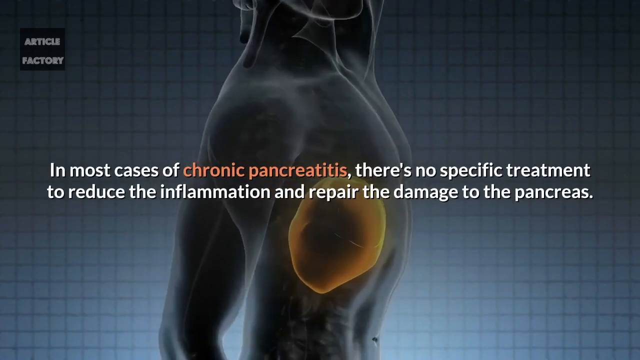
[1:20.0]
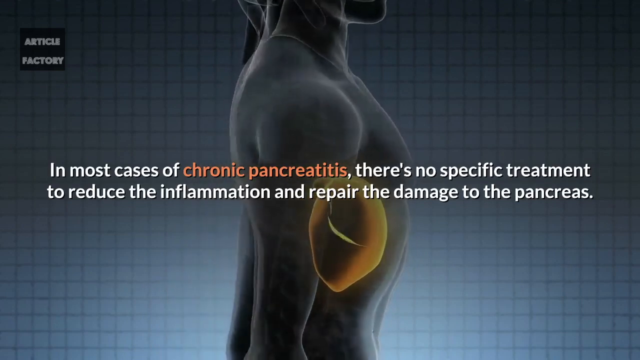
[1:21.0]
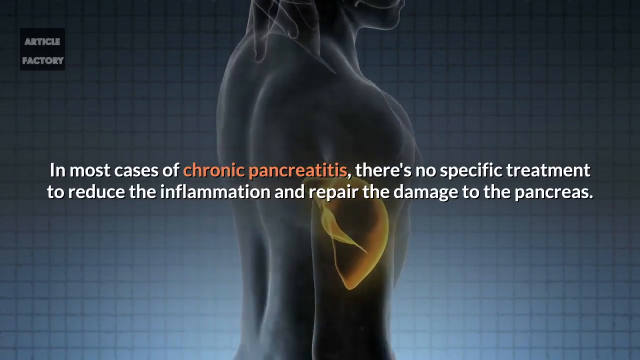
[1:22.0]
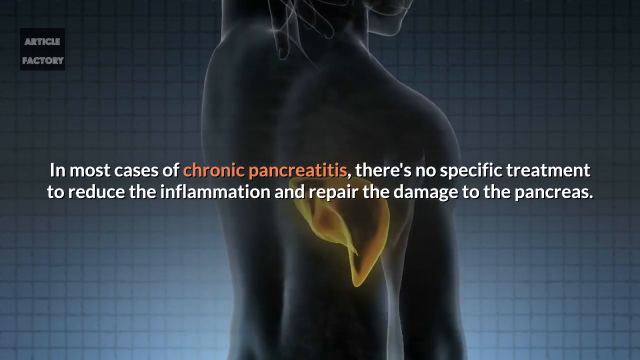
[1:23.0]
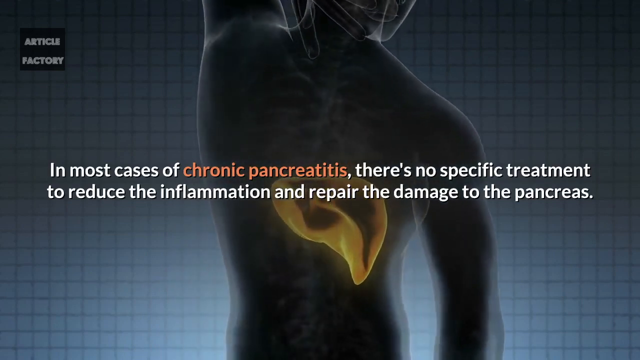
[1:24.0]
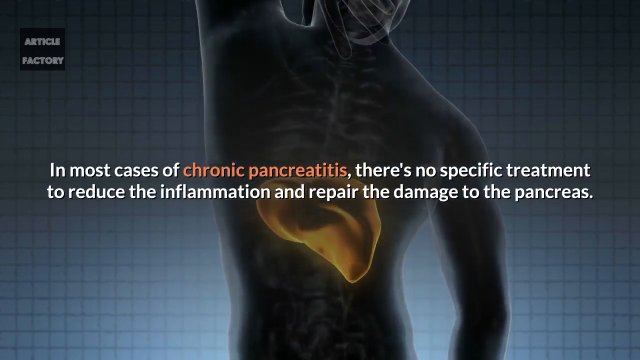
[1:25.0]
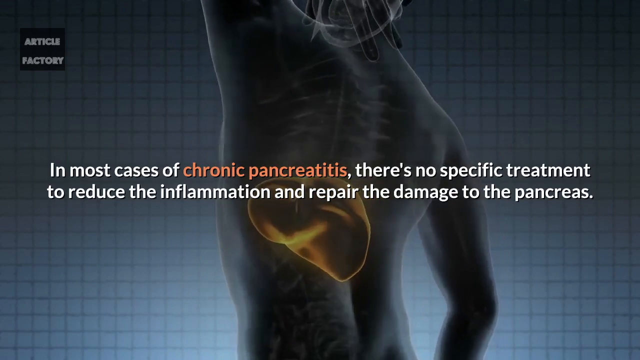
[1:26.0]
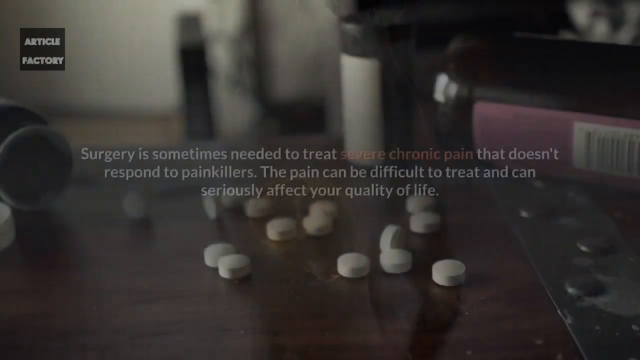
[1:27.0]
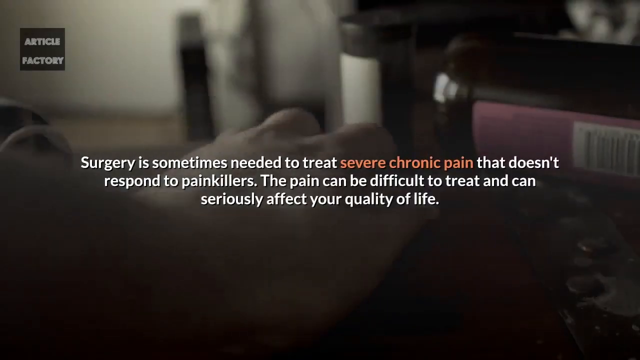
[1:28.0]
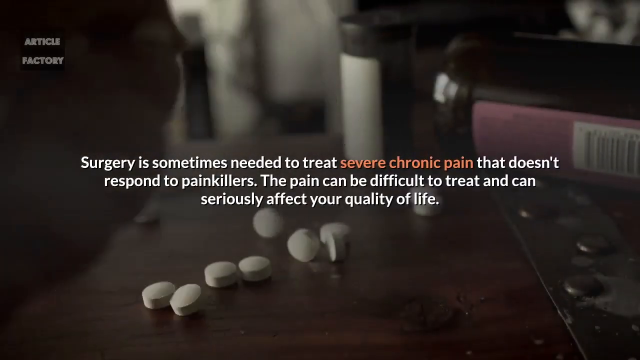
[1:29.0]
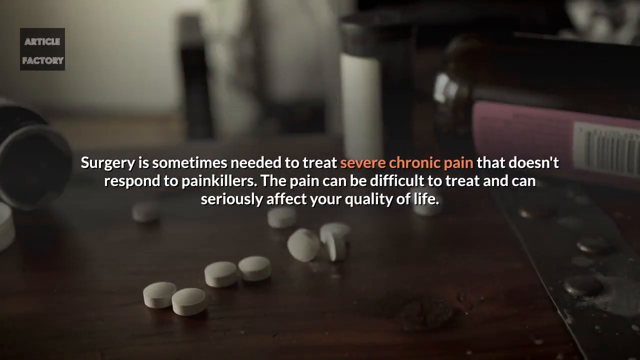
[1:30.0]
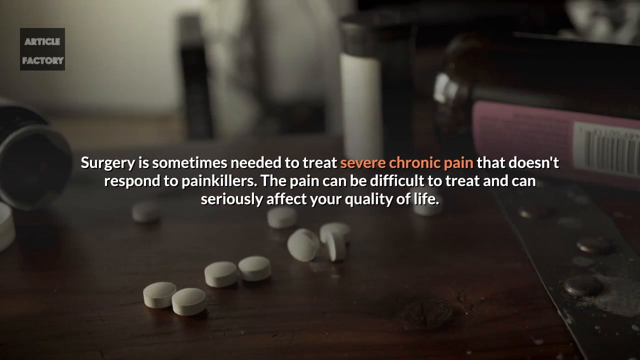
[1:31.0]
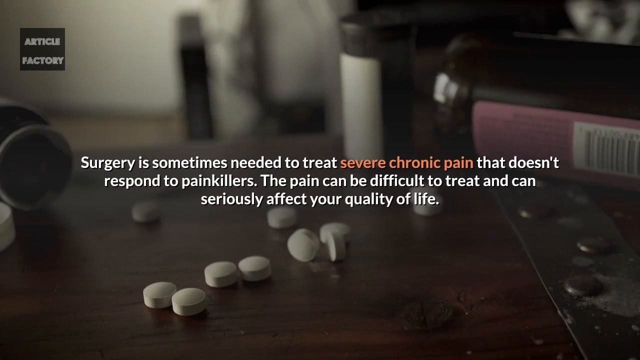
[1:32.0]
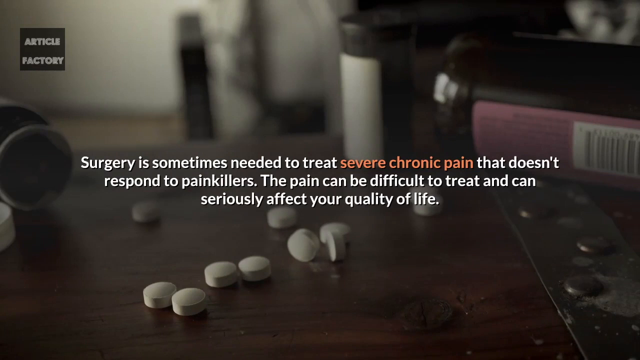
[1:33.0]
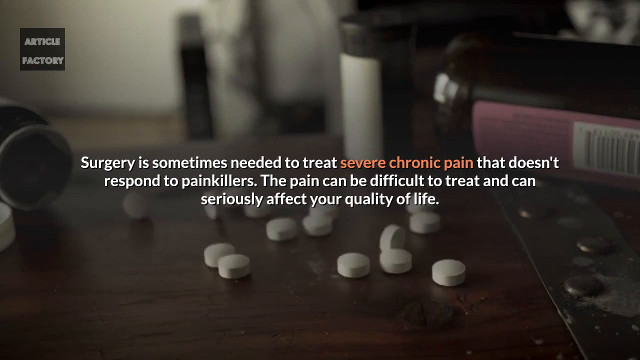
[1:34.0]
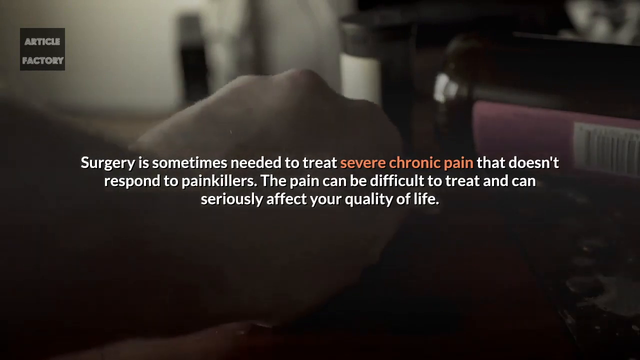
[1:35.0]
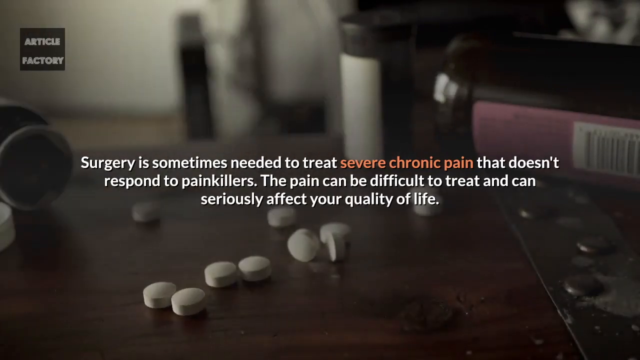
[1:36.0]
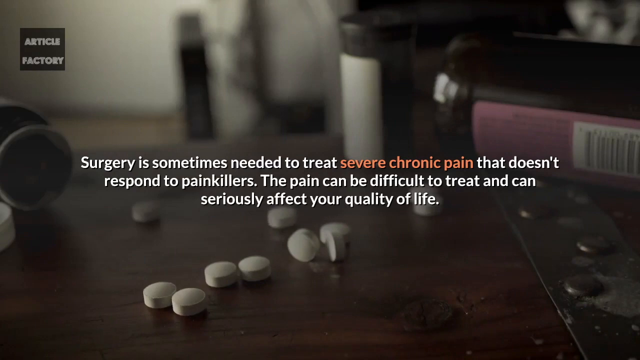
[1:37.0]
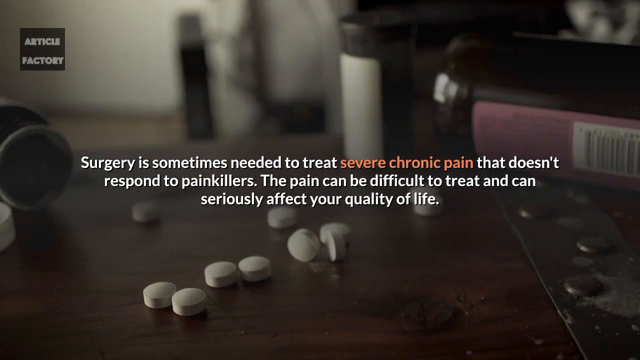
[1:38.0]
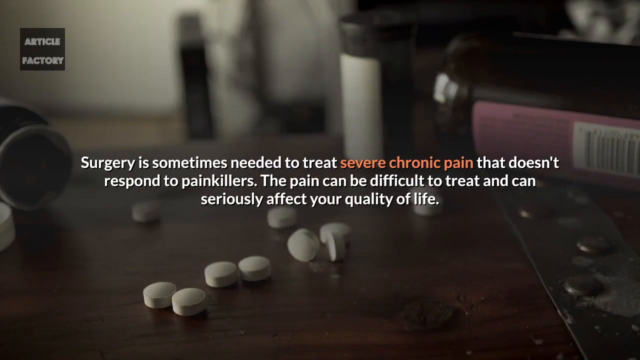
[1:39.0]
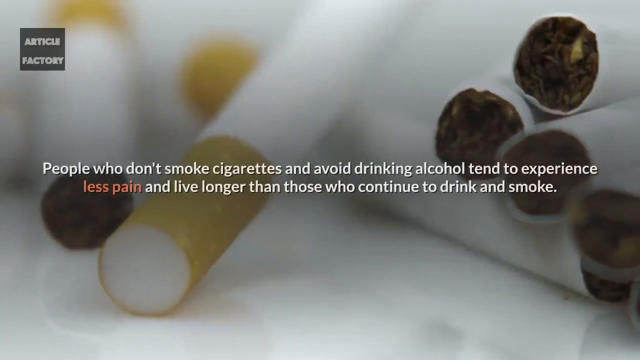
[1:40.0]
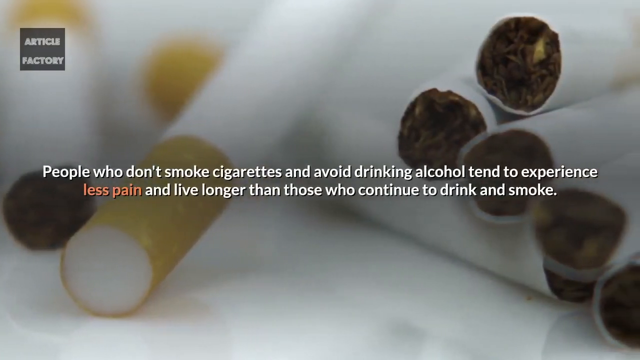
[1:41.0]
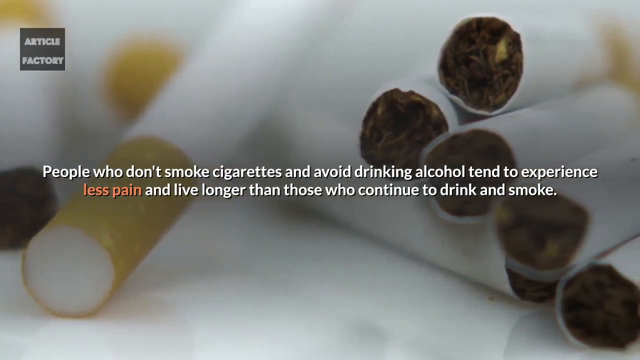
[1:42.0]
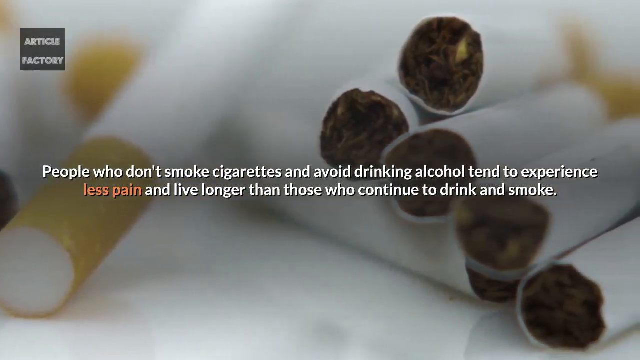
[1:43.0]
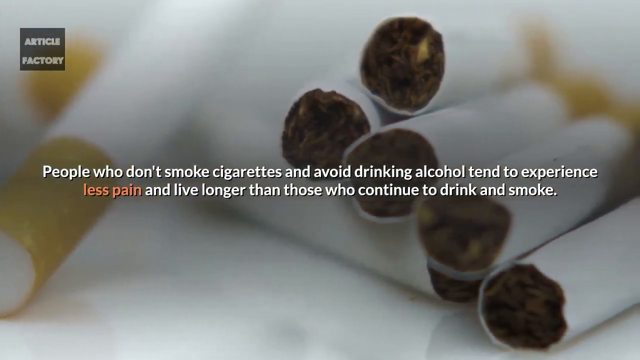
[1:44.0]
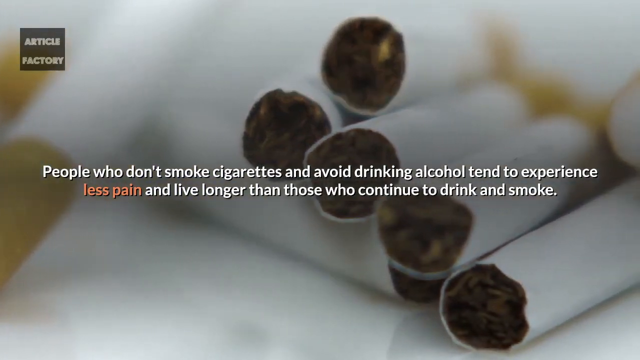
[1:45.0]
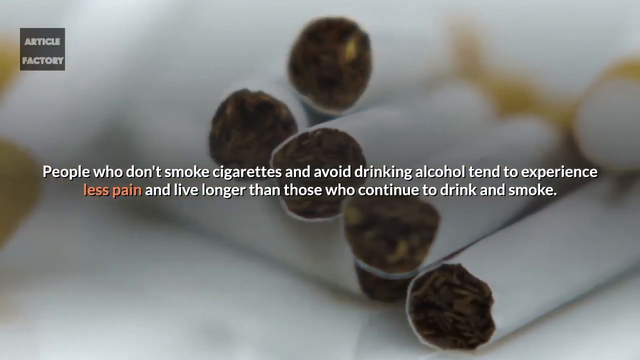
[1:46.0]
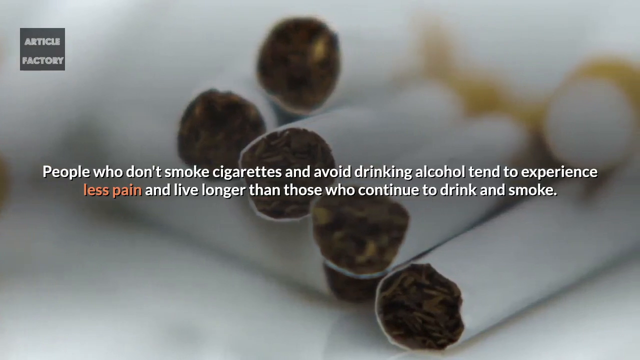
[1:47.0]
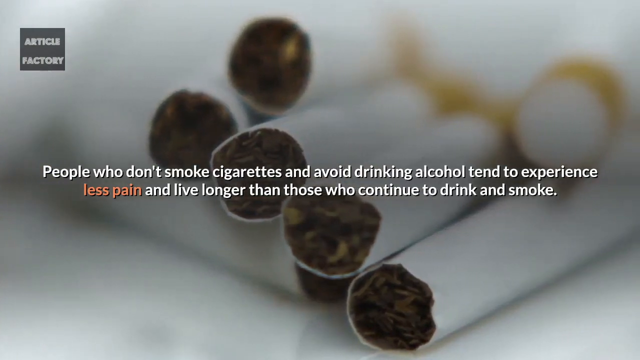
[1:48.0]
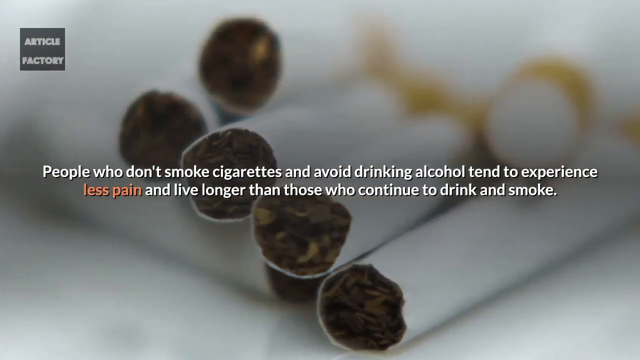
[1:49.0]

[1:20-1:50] The text reads "In most cases of chronic pancreatitis, there's no specific treatment to reduce inflammation and repair the damage to the pancreas" over a 3D version of somebody's stomach or pancreas. Further text reads "Surgery is sometimes needed to treat severe chronic pain that doesn't respond to painkillers. Pain can be difficult to treat and can seriously affect your quality of life." Somebody grabs pills off the table, about to take some. The next slide shows cigarettes with the text "people who don't smoke cigarettes and avoid drinking alcohol tend to experience less pain and live longer than those who continue to drink and smoke."